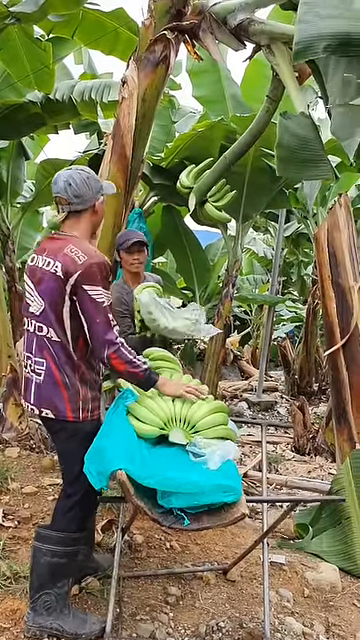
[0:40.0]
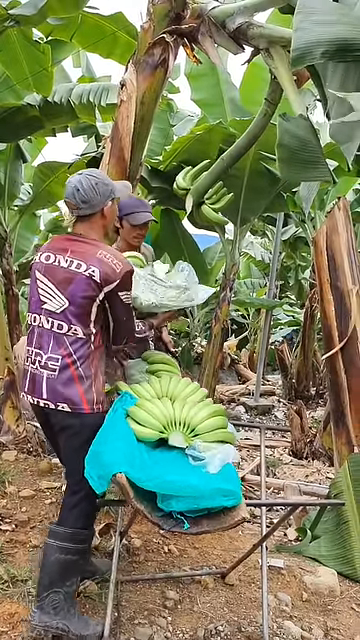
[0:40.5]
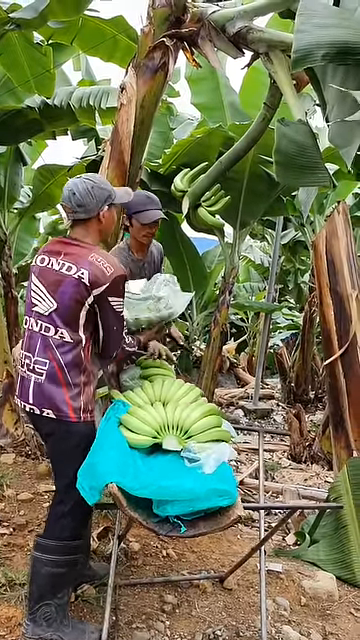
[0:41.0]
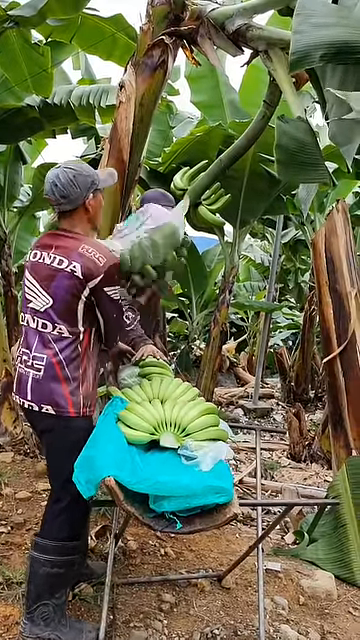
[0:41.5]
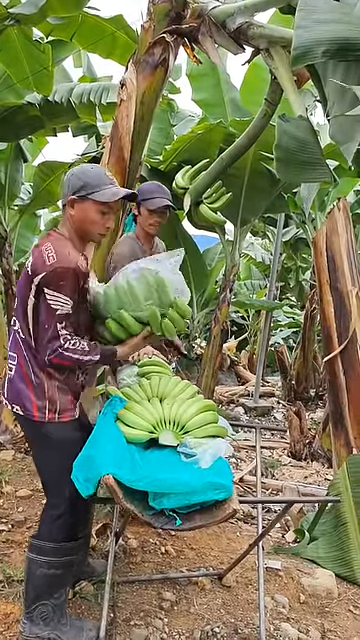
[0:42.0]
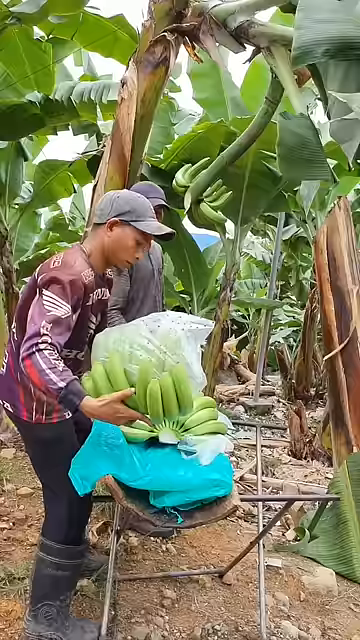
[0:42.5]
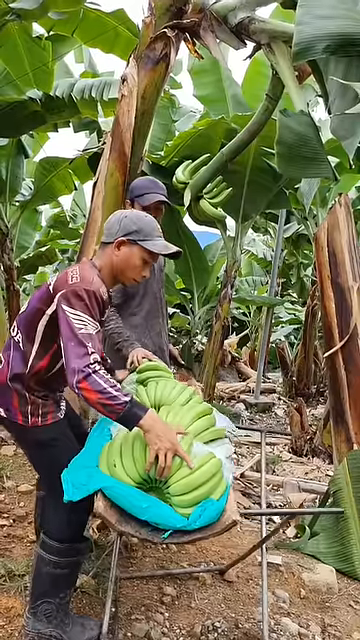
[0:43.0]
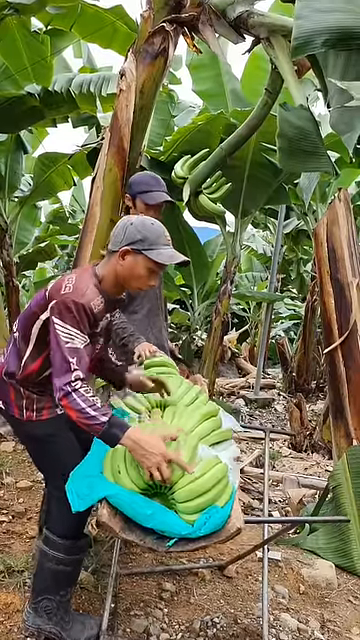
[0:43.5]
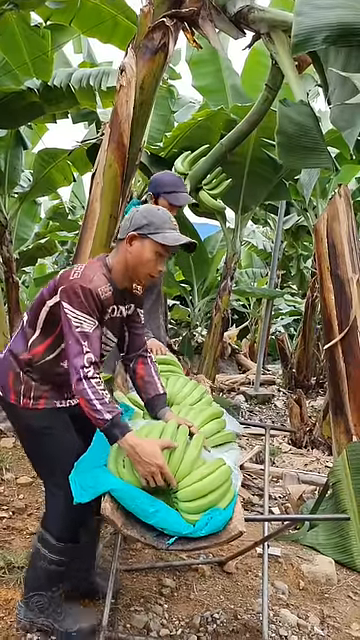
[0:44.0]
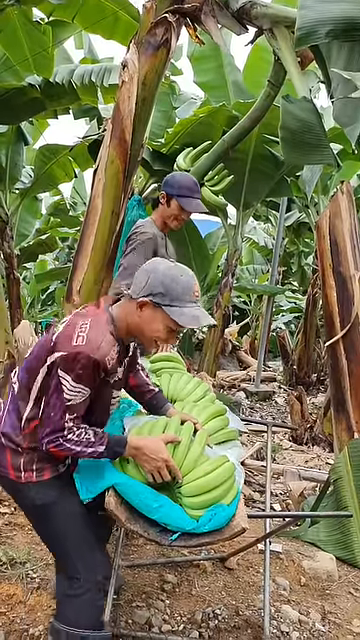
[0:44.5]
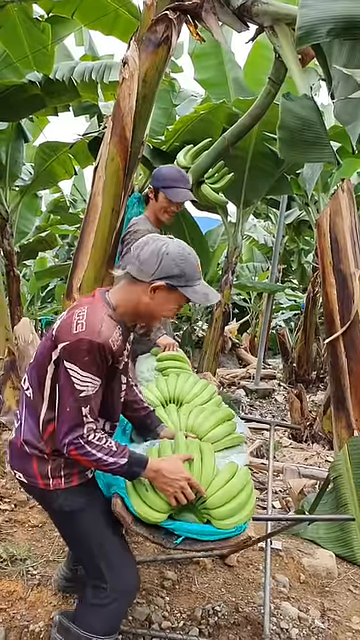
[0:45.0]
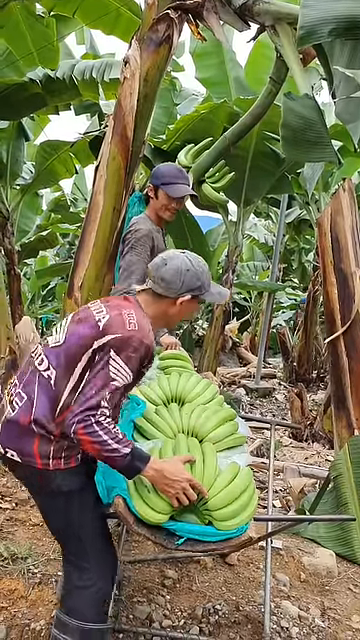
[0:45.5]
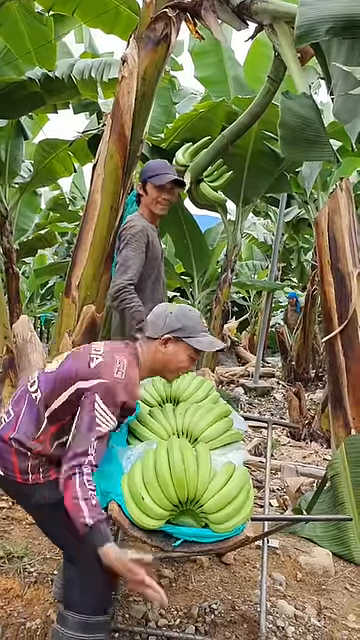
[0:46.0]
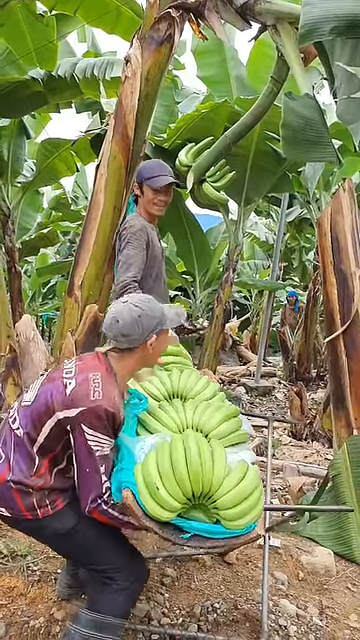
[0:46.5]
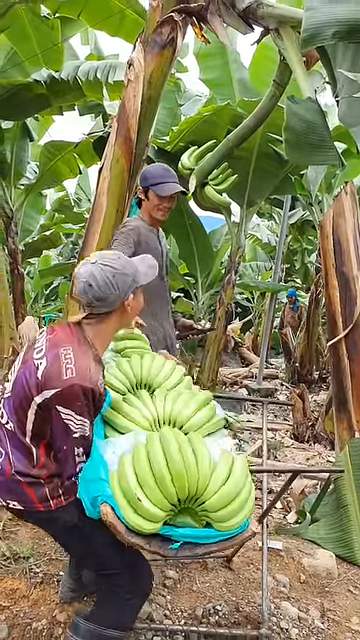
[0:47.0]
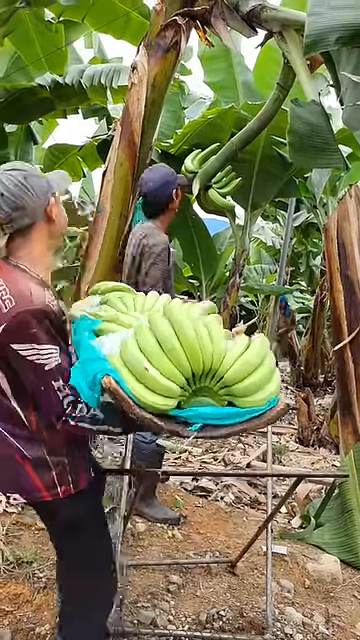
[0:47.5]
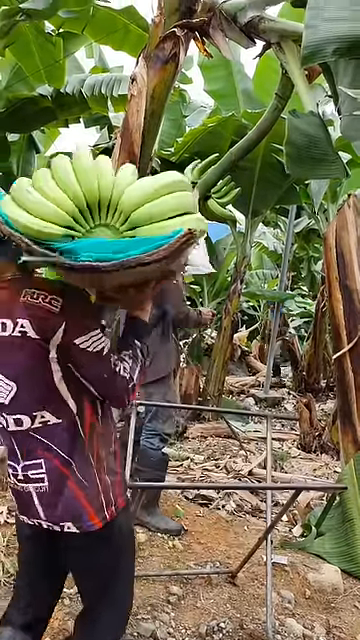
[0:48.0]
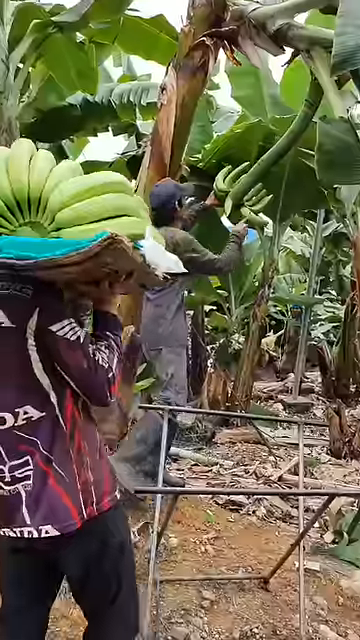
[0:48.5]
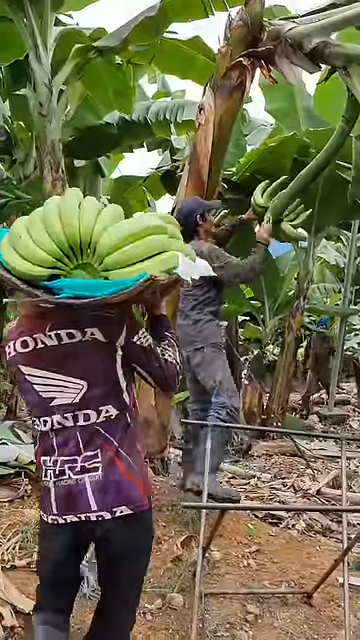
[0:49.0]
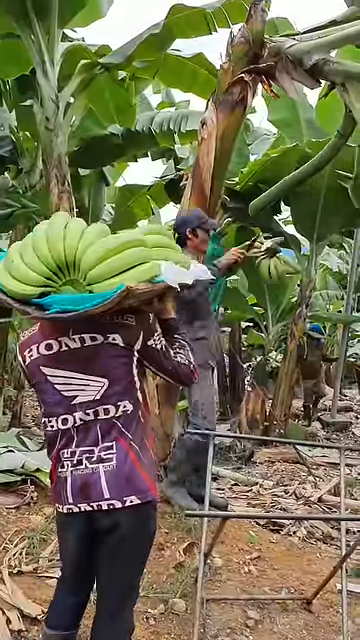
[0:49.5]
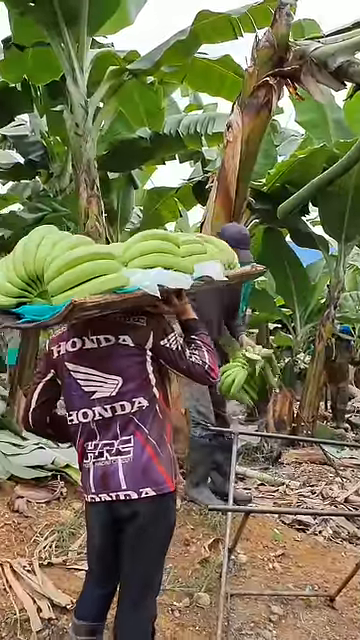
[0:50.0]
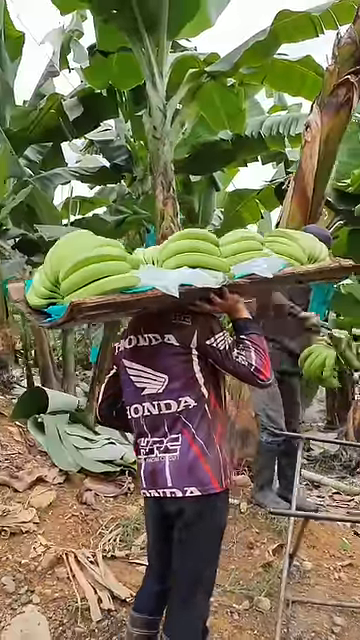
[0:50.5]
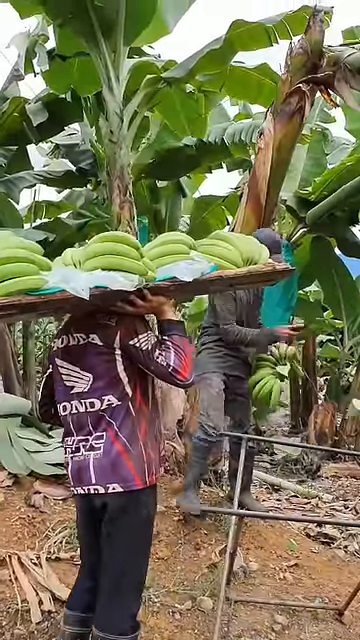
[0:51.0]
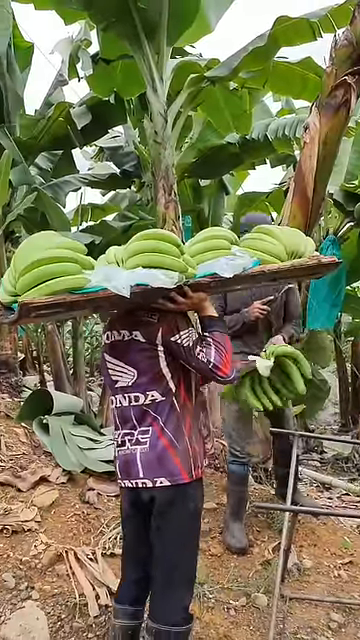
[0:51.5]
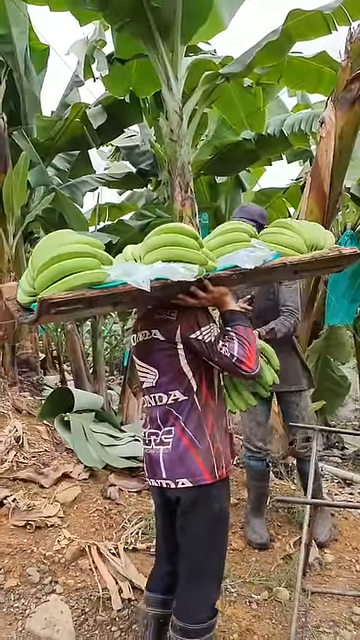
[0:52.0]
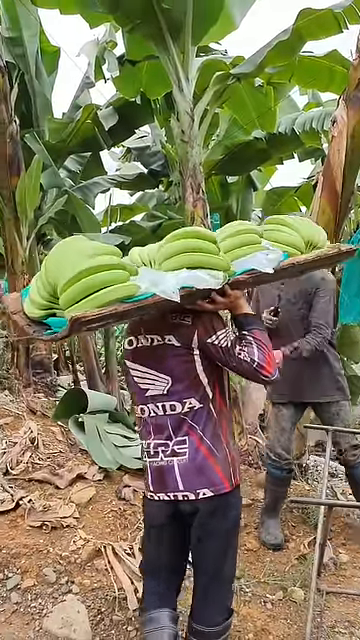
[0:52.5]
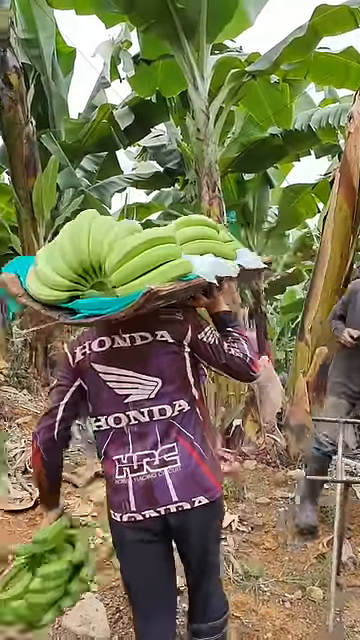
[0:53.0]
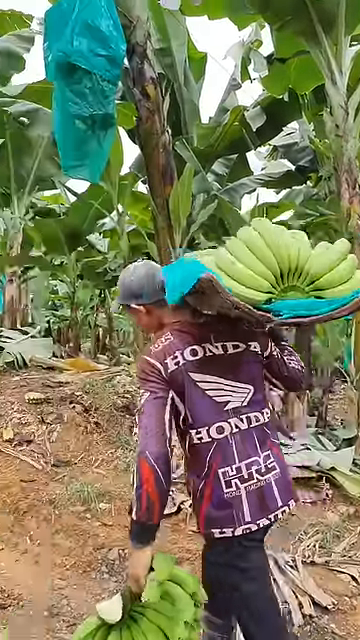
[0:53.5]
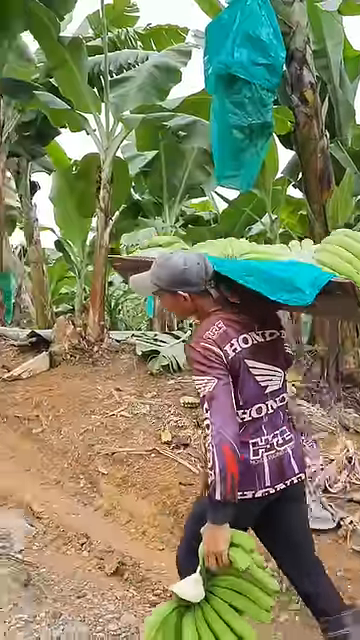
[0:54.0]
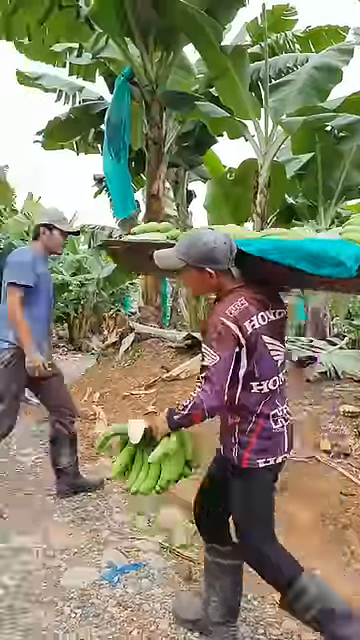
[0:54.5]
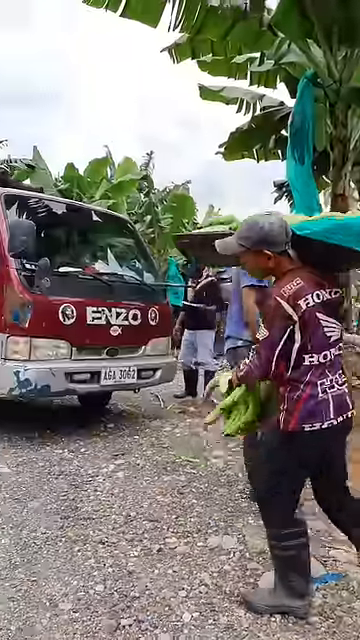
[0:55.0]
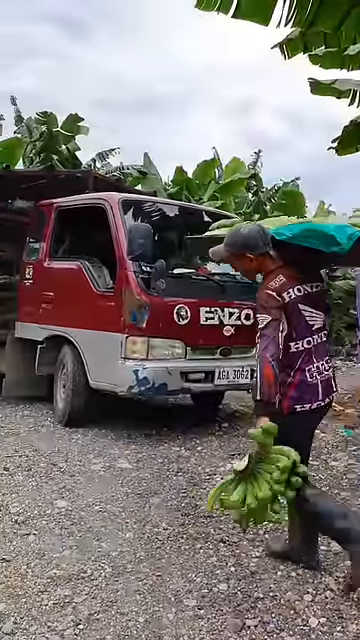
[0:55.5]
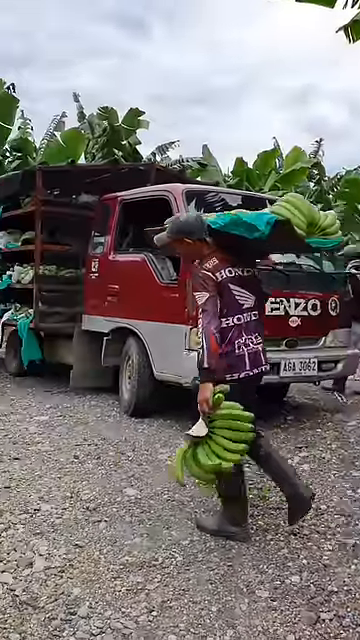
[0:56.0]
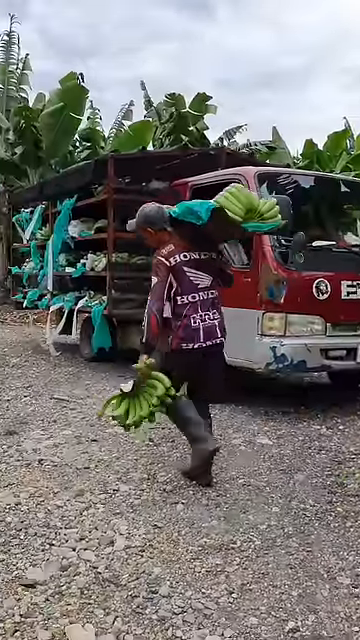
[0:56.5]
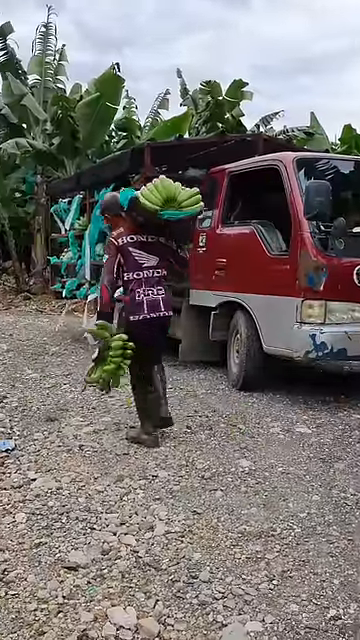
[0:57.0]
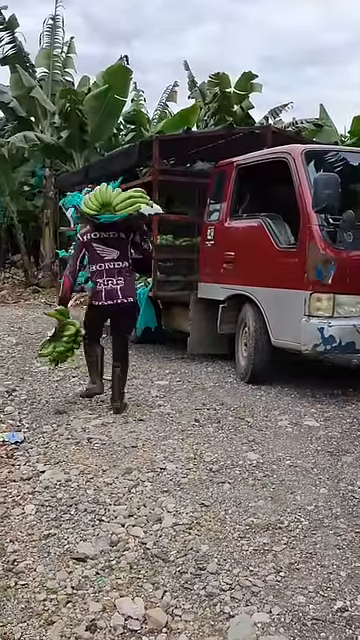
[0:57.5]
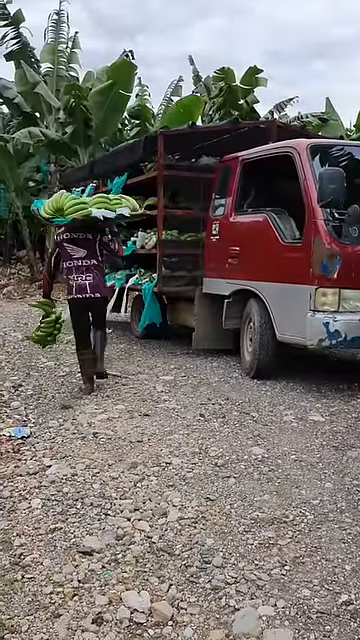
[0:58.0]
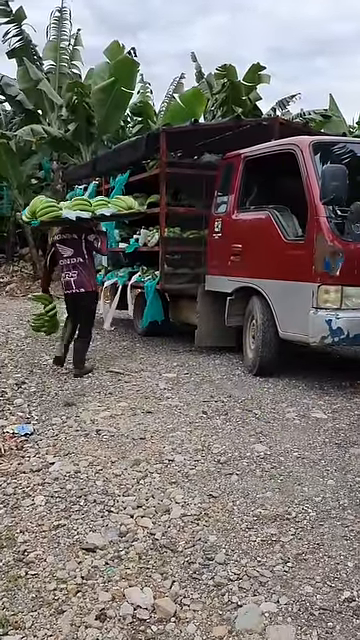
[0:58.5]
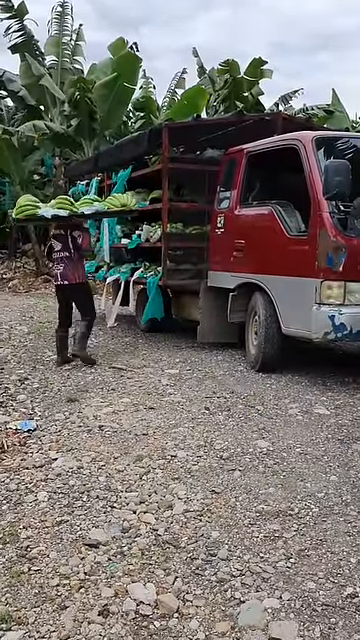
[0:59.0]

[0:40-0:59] Two men stand in front of a large banana harvesting station. The first man, wearing a baseball cap, a long-sleeved shirt, and pants, tosses batches of bananas to the second man, who carries them away on the tabletop on his right shoulder to a delivery truck waiting to be loaded. The man carrying the bananas wears a long-sleeved shirt, pants, and a baseball hat. The bananas on the tabletop rest on a blue covering, and when the man walks to the delivery truck, a couple more people are standing by.